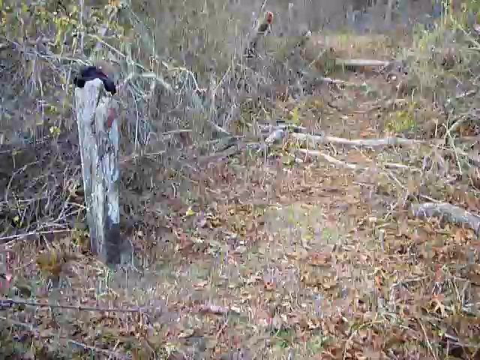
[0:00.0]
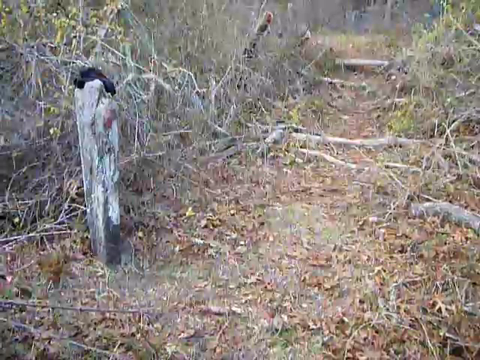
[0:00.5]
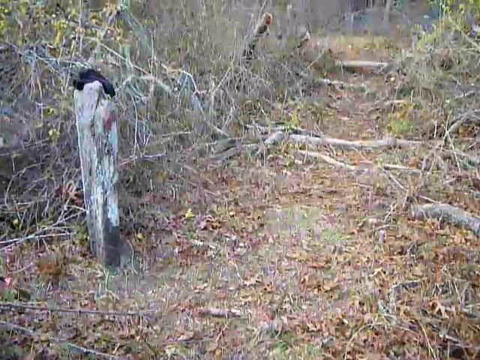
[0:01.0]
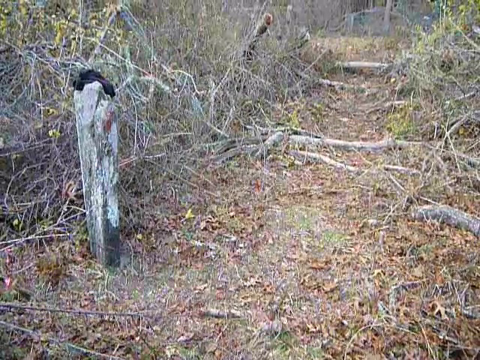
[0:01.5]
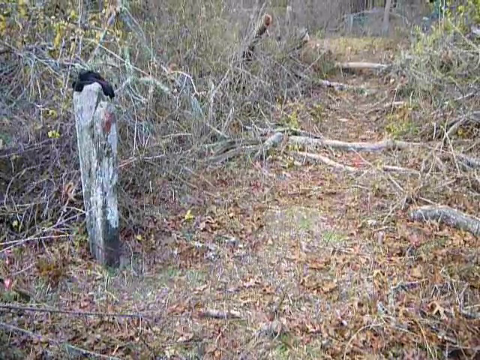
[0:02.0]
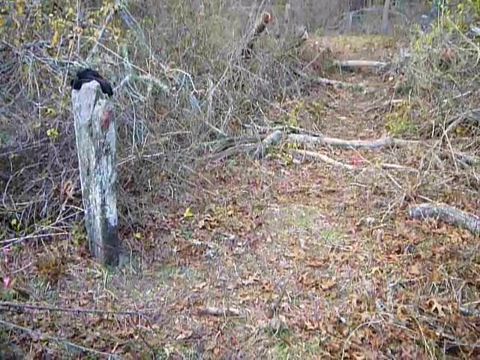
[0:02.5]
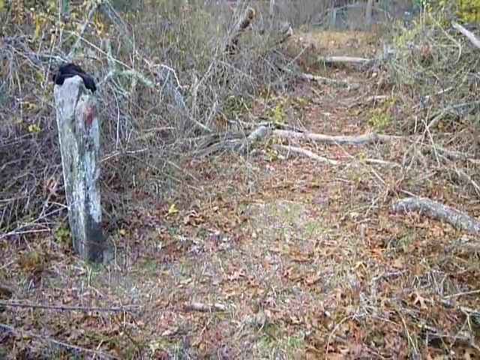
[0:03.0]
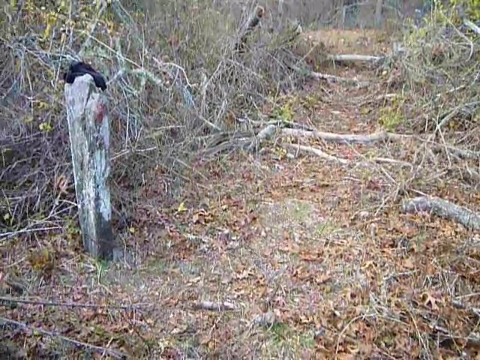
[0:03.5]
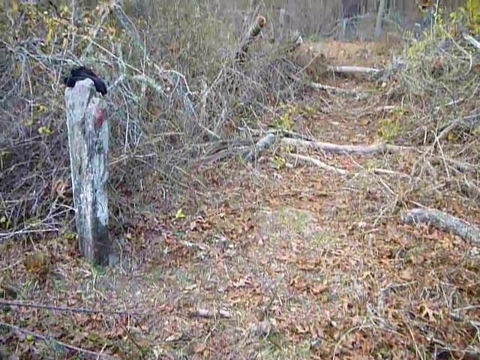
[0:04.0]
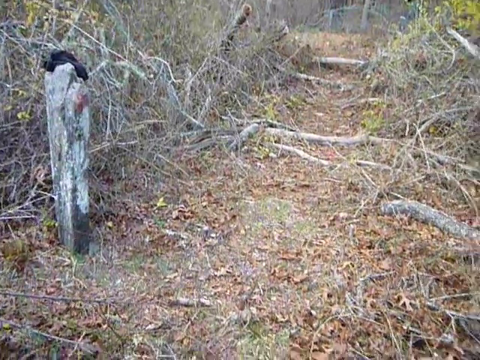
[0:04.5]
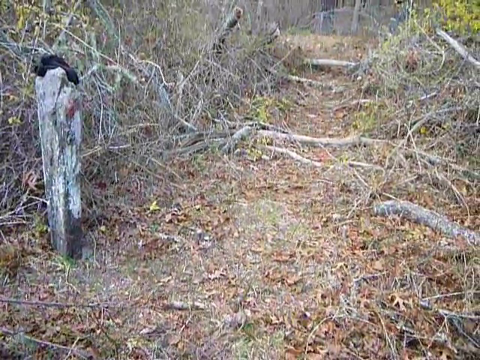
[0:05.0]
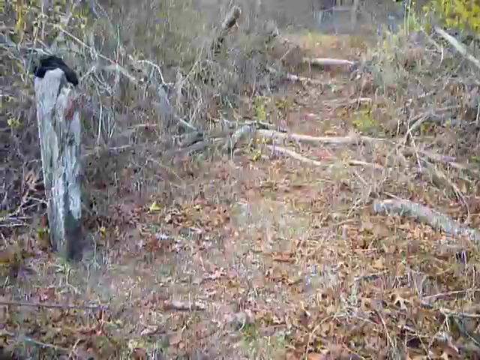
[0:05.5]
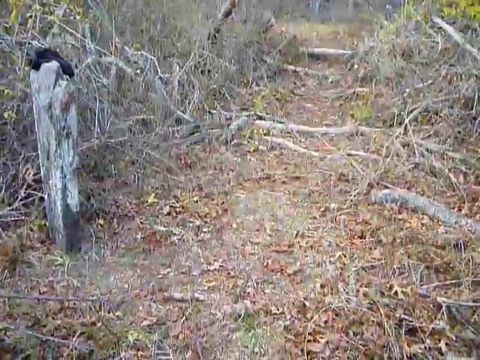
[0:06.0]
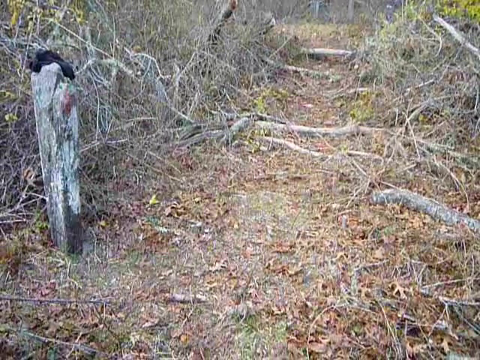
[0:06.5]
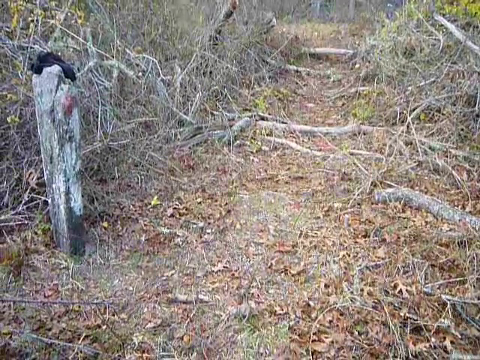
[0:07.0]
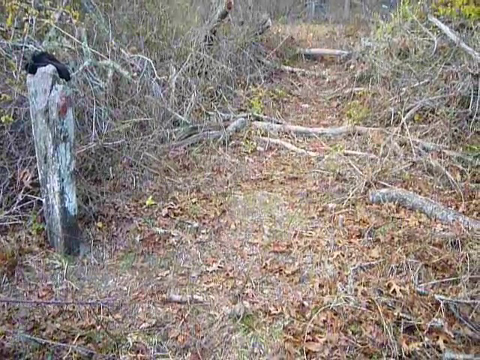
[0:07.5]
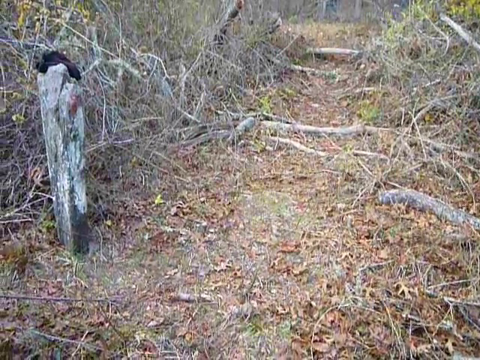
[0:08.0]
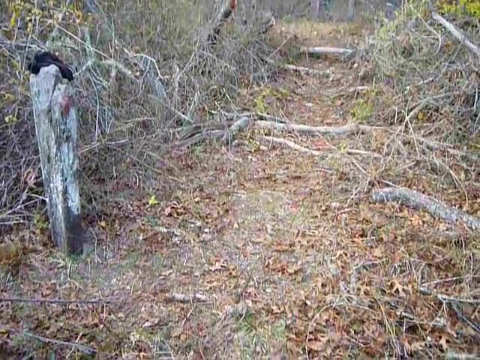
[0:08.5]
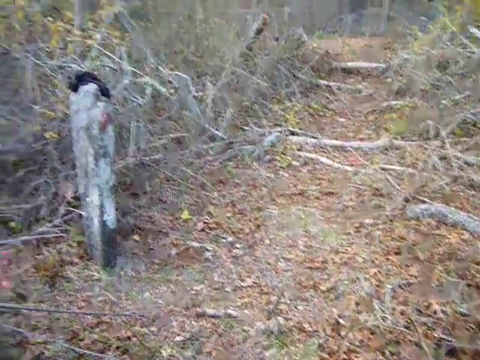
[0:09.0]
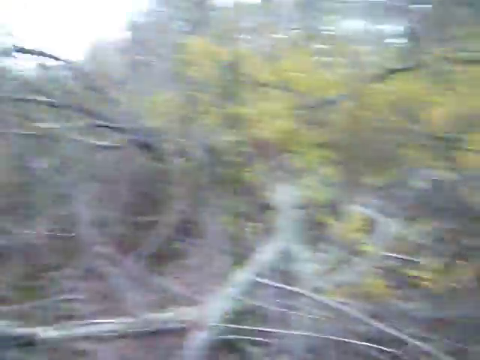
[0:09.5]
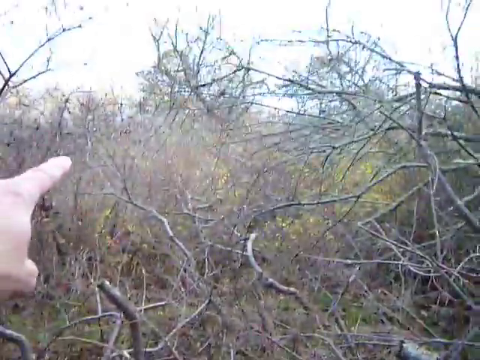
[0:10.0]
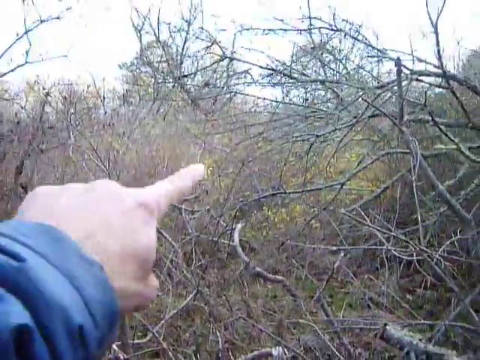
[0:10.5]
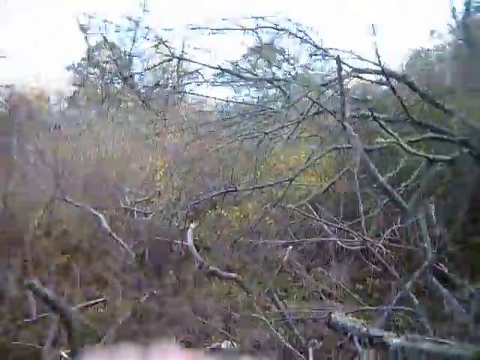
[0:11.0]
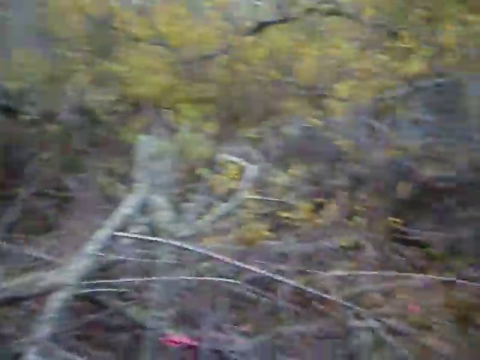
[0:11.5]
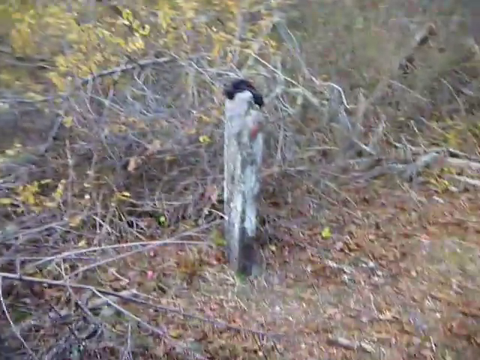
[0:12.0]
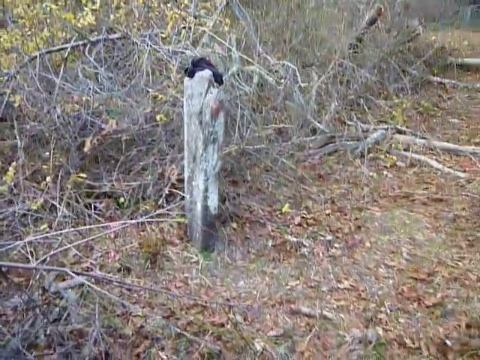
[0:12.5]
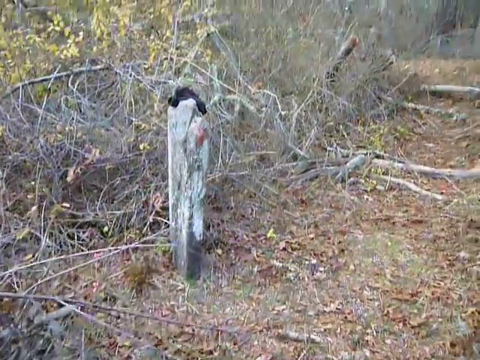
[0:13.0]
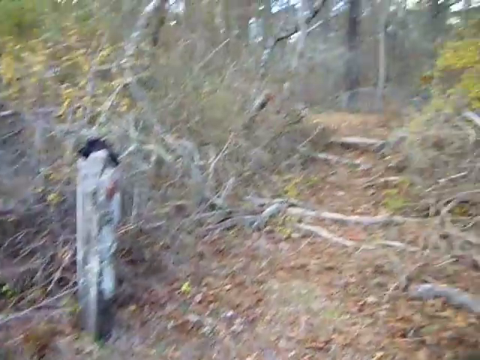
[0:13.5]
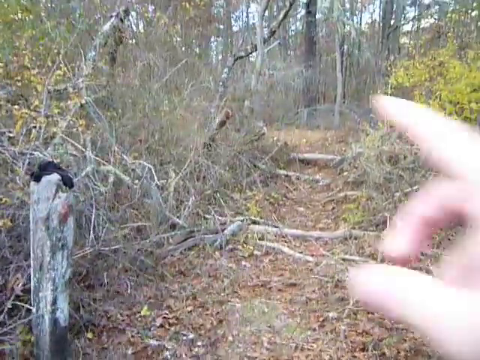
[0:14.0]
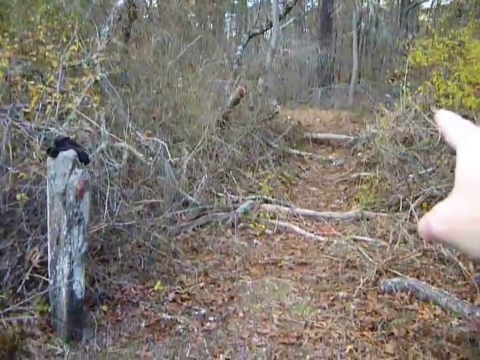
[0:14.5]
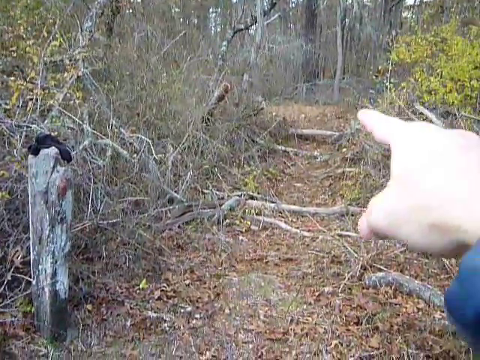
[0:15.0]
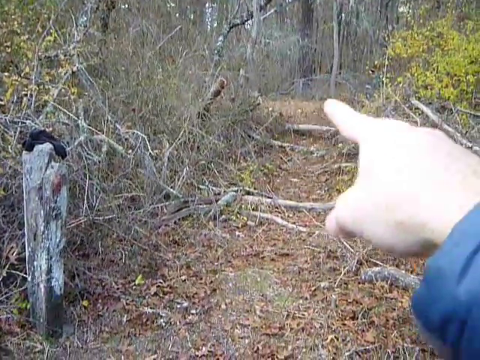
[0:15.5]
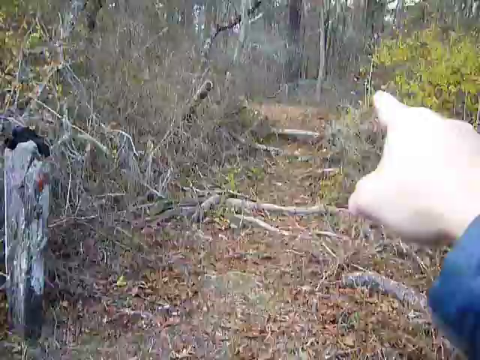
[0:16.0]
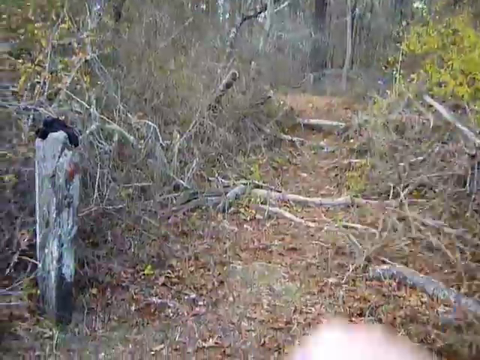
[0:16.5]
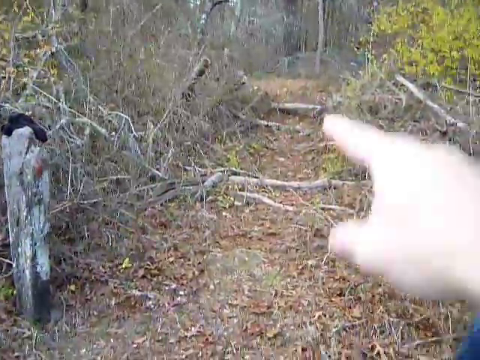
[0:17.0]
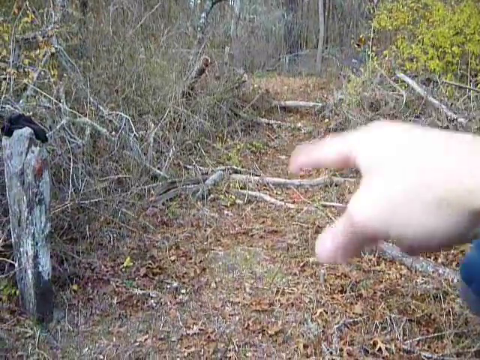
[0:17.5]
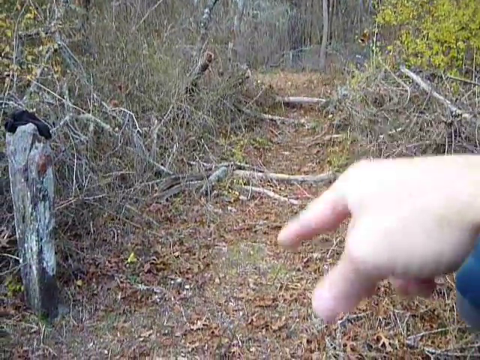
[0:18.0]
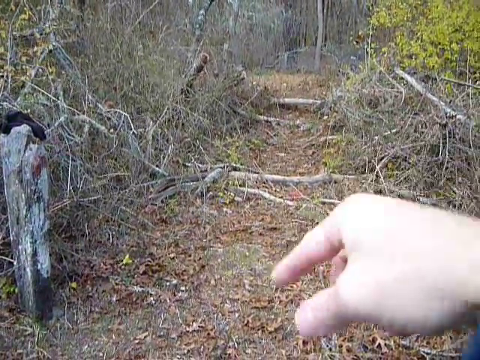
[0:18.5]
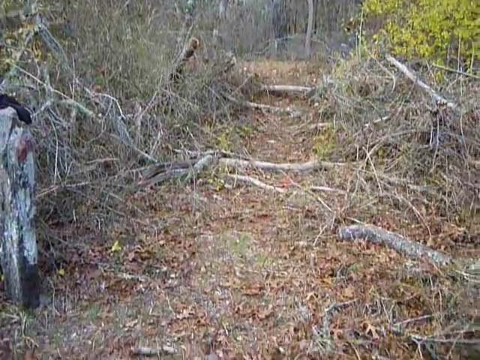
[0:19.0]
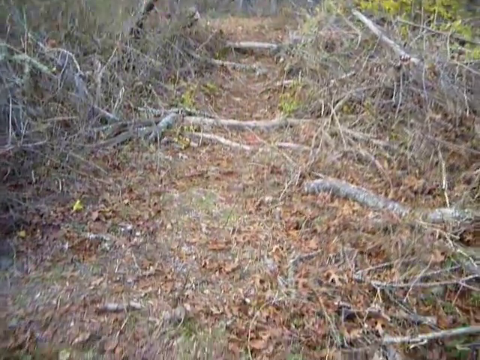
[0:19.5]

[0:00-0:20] The setting is outdoors in nature, in the mountains, in a forest or somewhere similar. There are several fallen trees or branches, with a lot of branches and leaves in front. A small, narrow gap between these piles of branches forms a small path. The camera turns to the left and the cameraman's left hand points at something in the distance, behind some very tall, fallen branches. The wood looks dry and gray. The camera turns back to show the same path, and the cameraman's right hand points at it, possibly at something specific in the background or while explaining something.